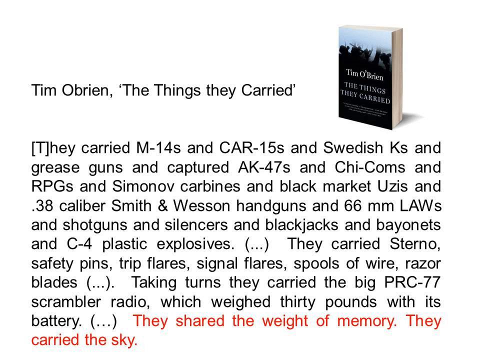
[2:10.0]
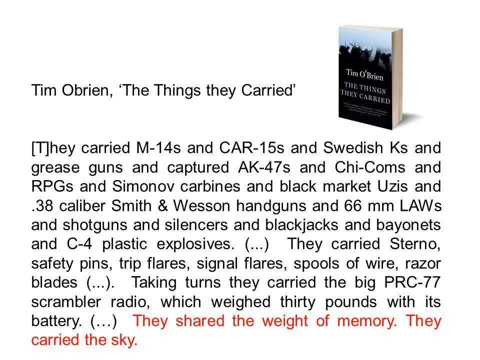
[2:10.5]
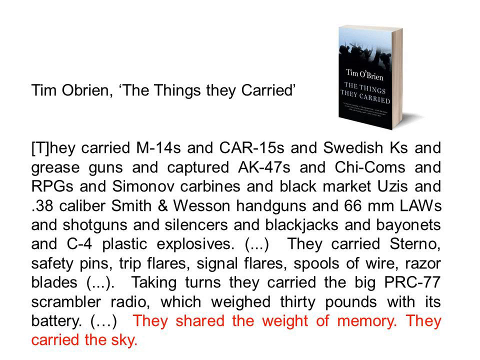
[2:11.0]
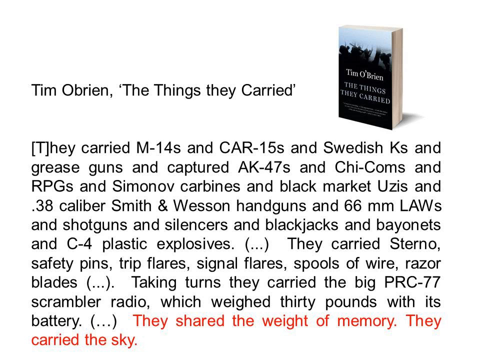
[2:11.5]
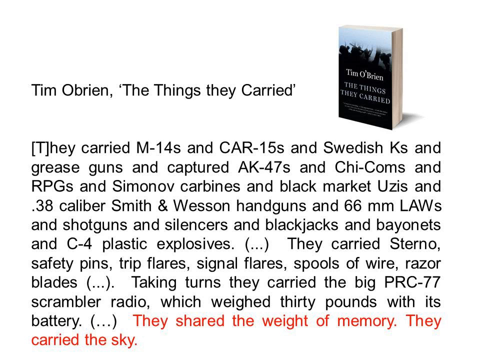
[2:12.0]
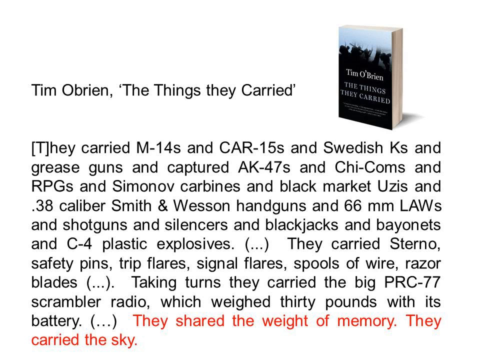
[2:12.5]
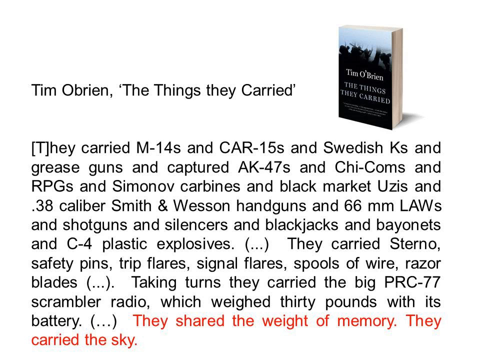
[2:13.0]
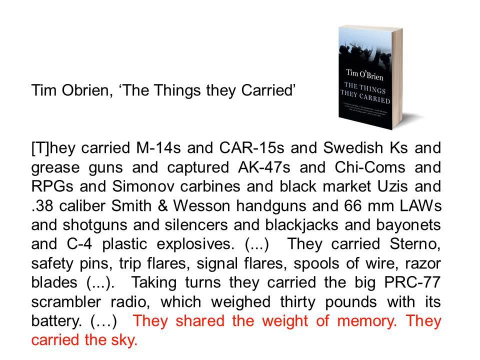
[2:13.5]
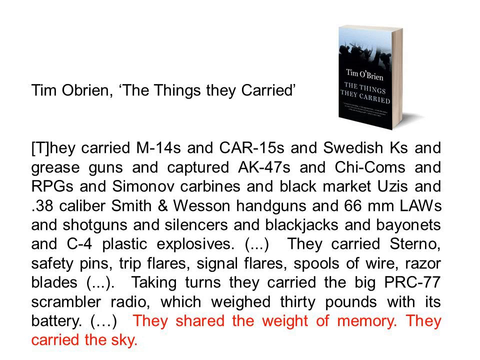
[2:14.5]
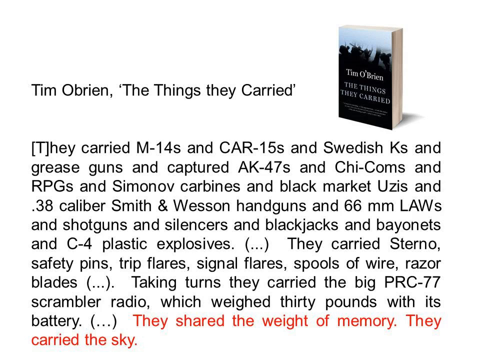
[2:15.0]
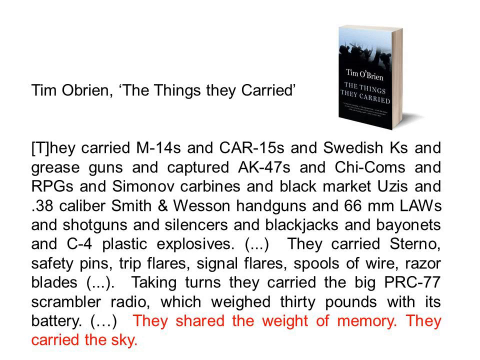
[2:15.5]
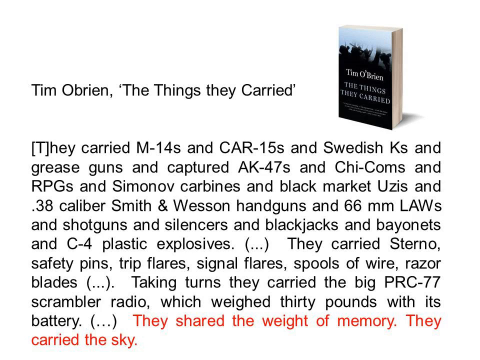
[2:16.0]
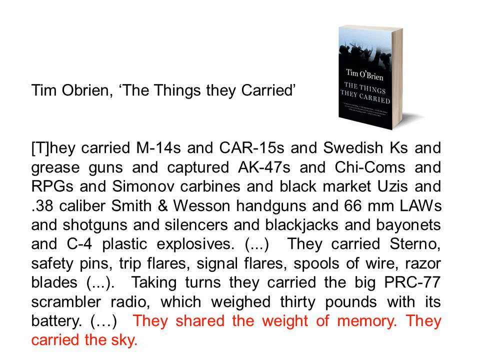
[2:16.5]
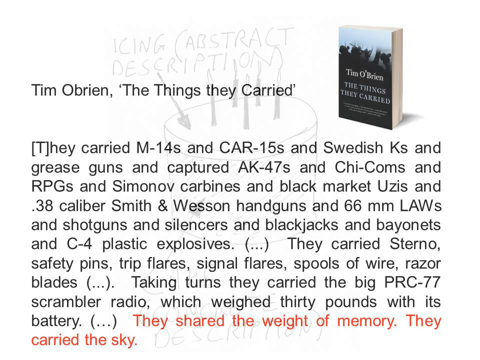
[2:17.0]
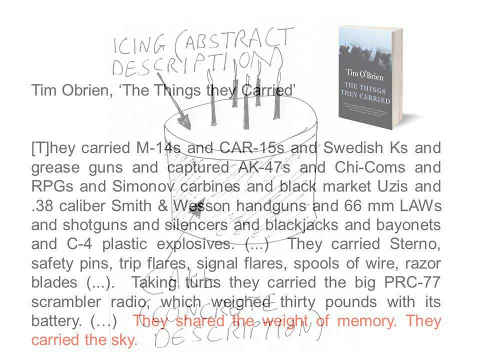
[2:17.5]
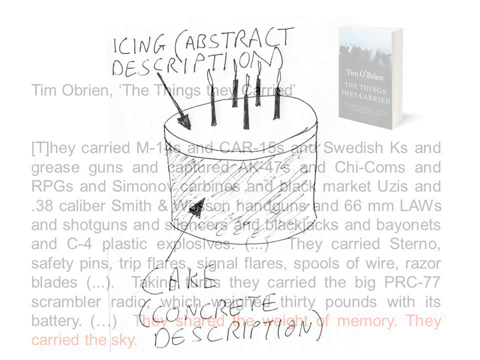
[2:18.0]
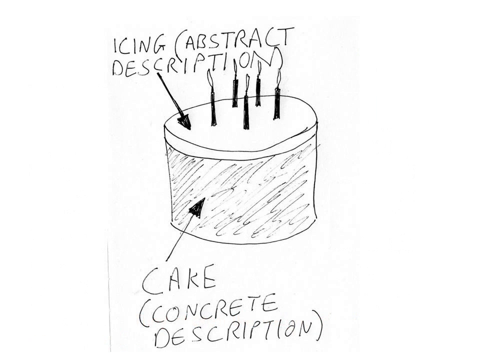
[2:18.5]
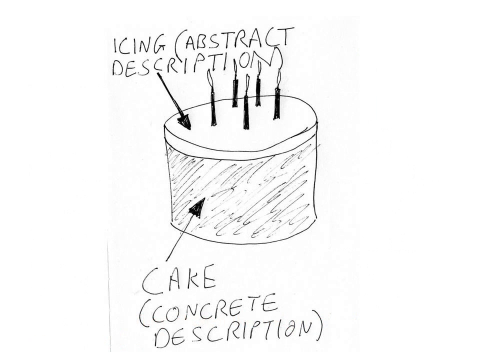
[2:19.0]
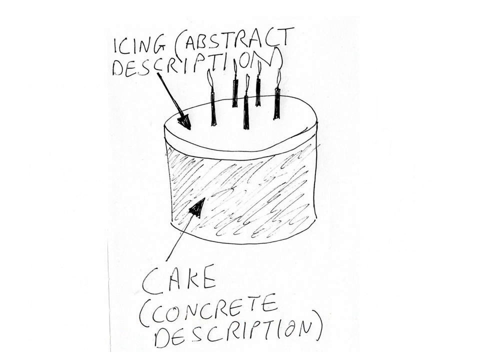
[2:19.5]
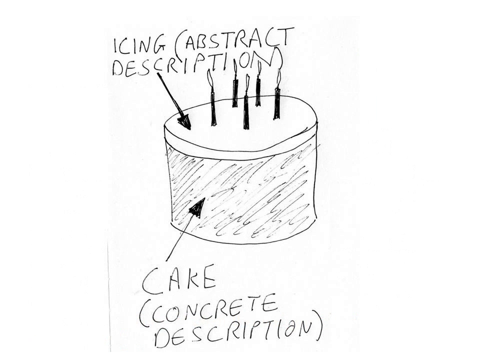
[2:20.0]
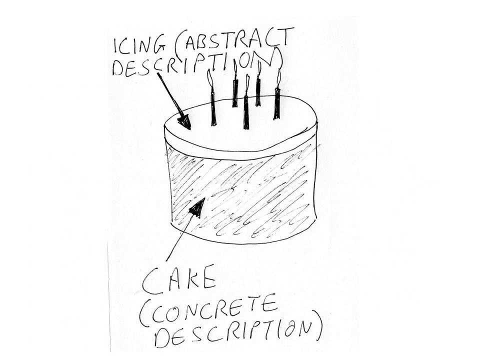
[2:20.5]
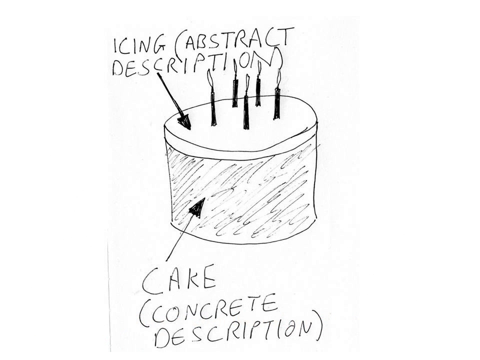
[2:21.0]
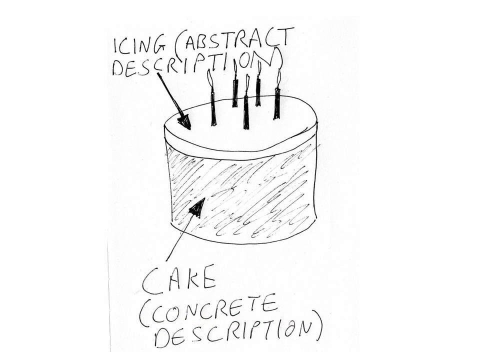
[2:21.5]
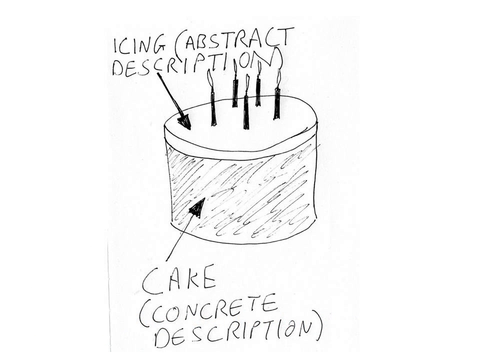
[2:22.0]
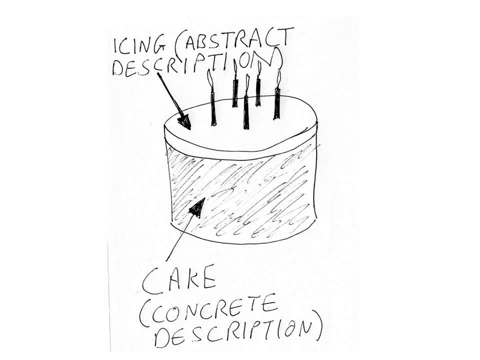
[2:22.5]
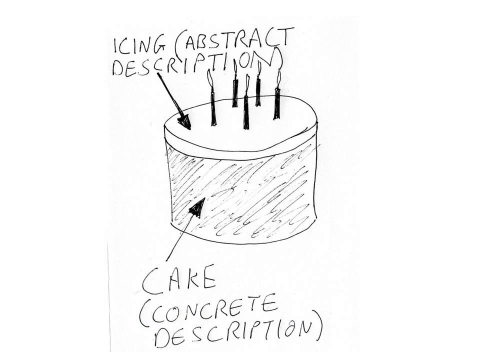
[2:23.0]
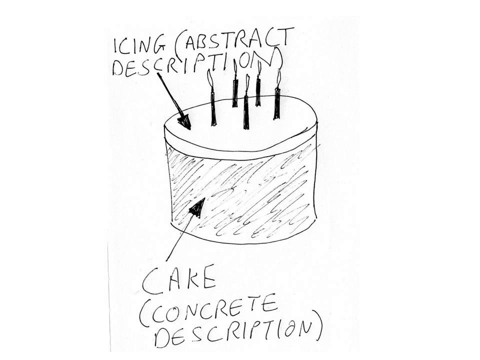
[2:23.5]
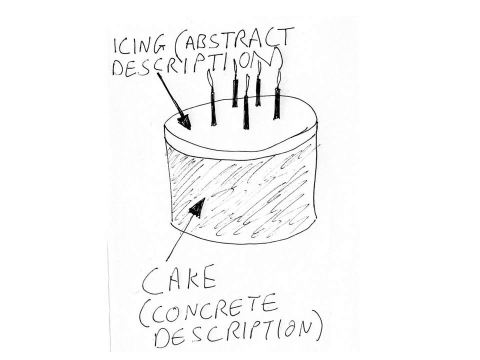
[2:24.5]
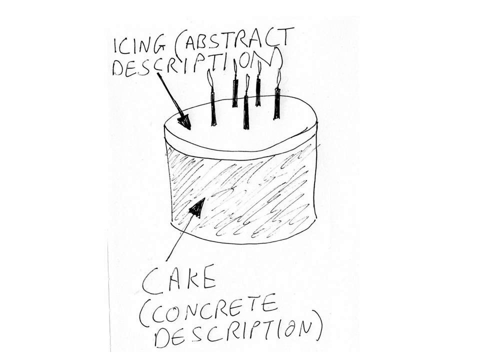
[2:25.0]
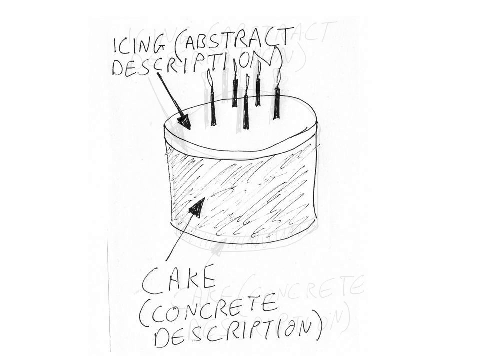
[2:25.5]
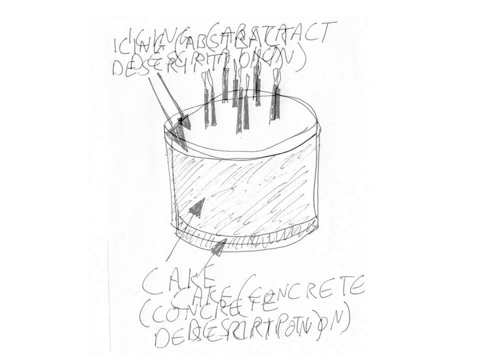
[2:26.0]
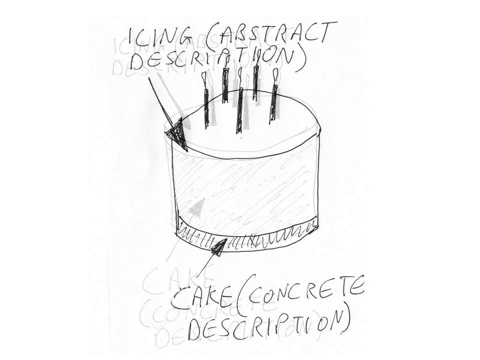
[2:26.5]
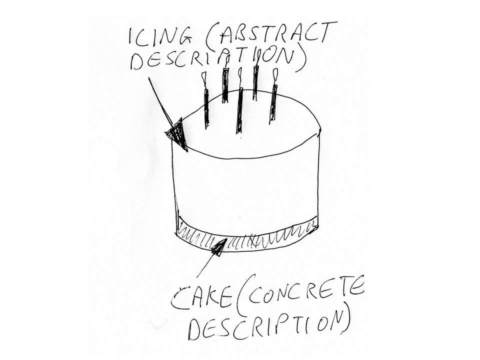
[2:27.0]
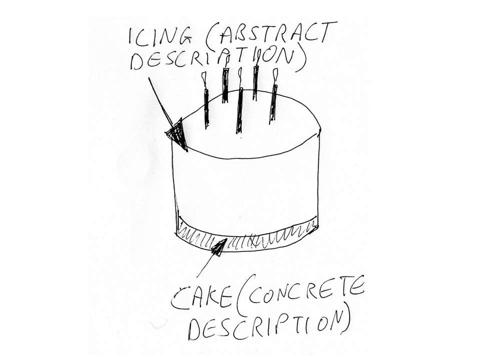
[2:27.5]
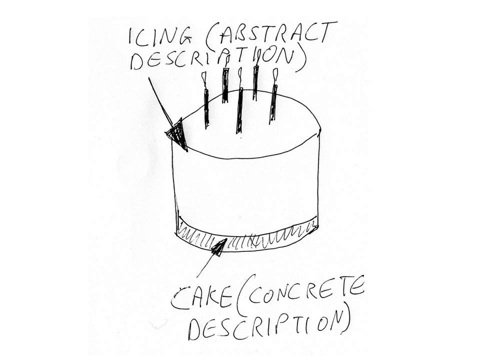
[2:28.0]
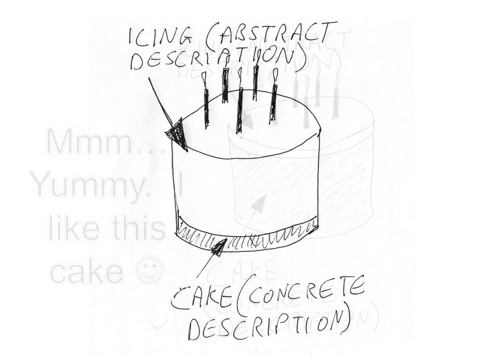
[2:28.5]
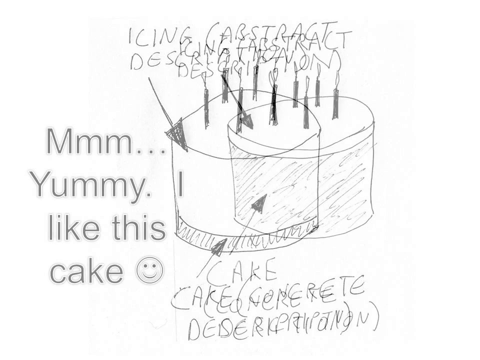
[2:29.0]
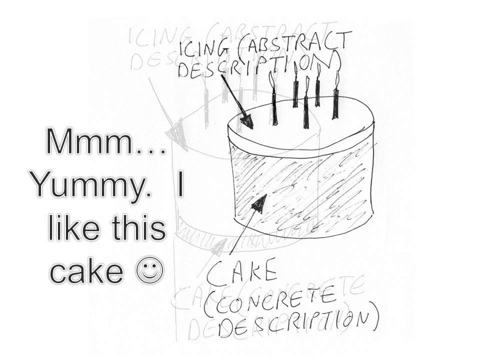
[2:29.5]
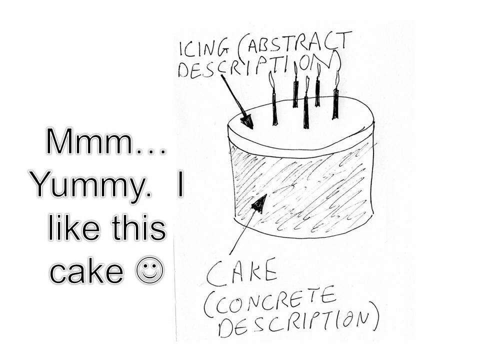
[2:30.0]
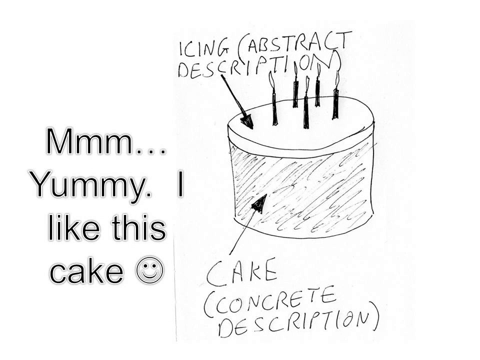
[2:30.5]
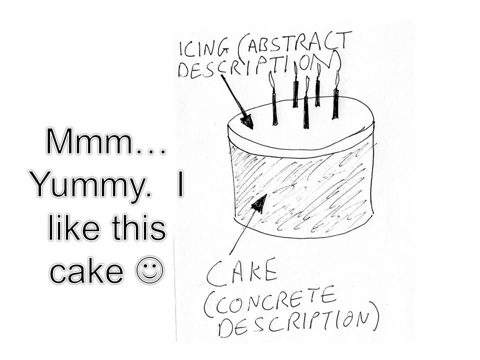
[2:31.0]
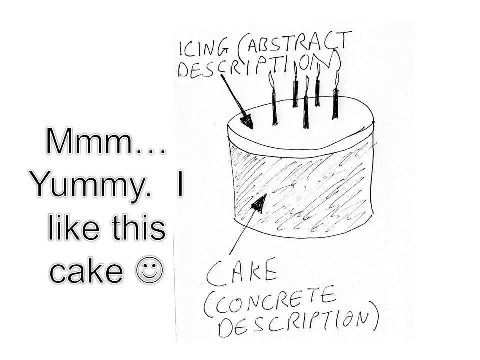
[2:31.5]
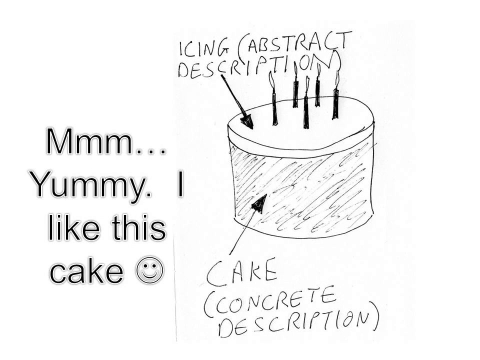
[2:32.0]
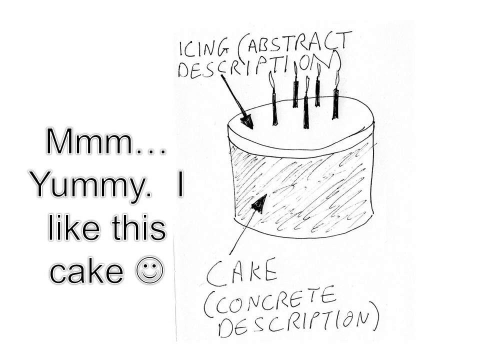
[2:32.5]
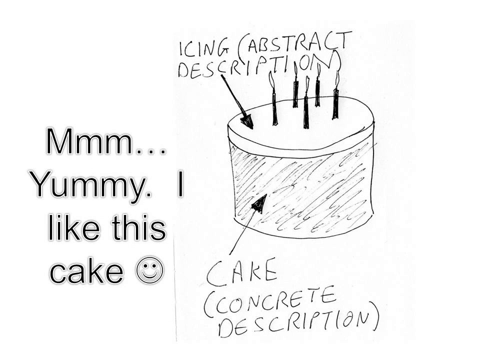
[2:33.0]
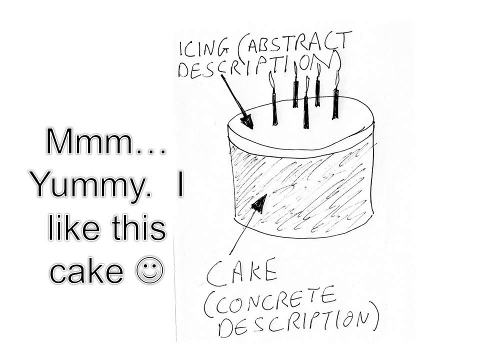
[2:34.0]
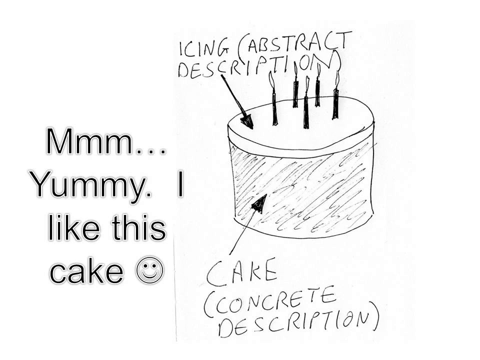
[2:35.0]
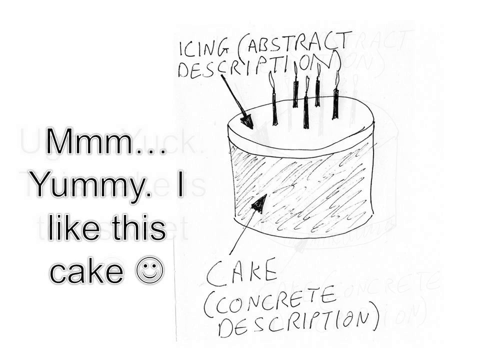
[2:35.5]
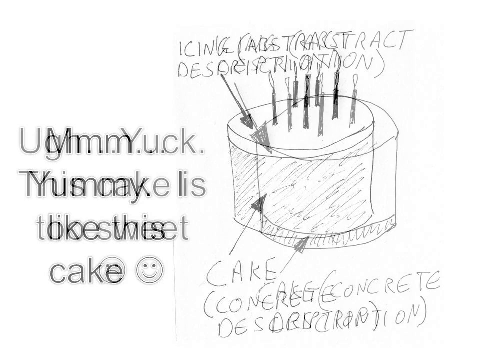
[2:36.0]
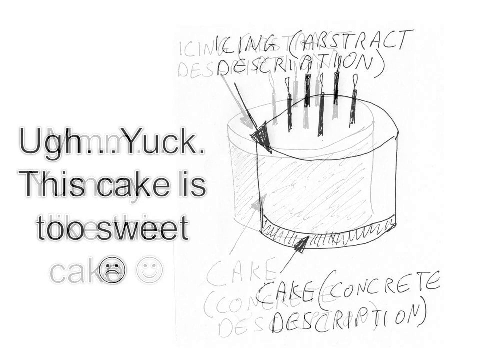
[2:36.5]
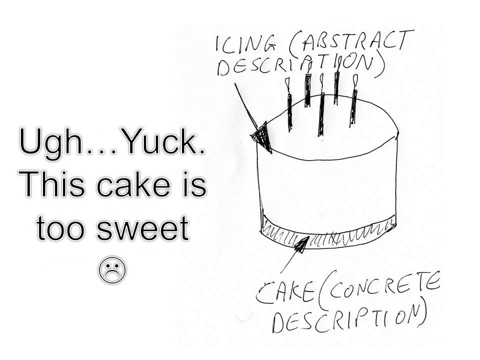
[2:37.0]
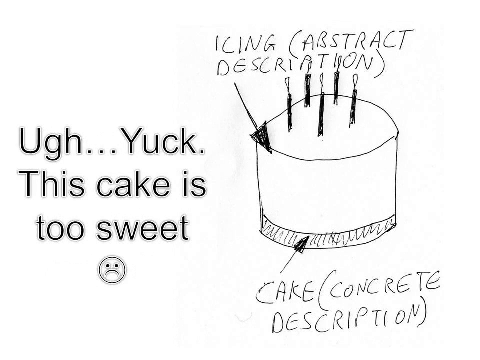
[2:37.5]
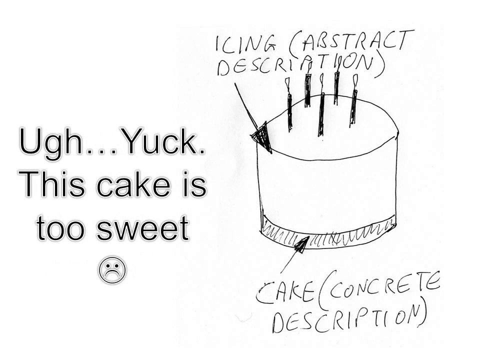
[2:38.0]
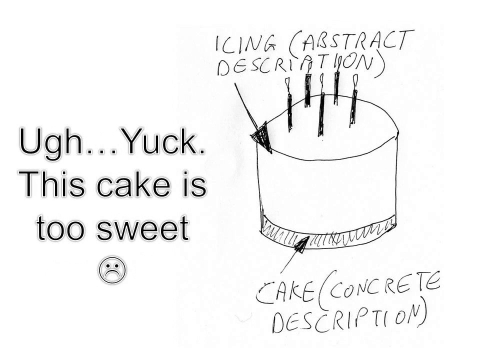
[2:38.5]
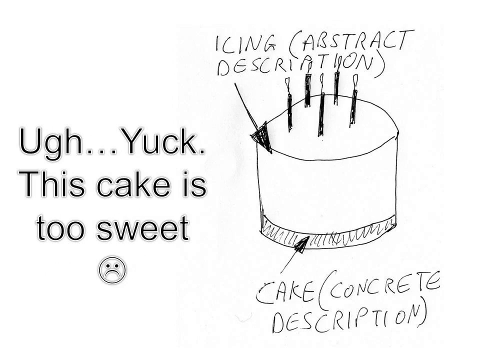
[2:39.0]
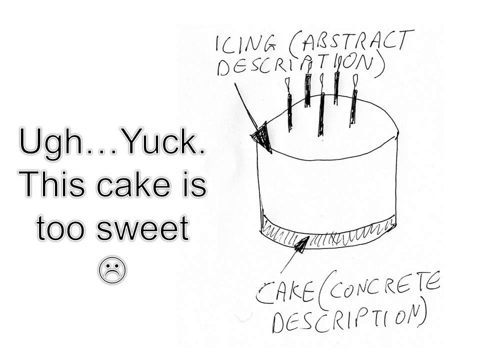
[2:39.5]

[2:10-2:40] On a white background, a book in the top right corner says "Tim O'Brien, The Things They Carried", and beside it the same words appear. The text below reads "they carried M-14s and CAR-15s and Swedish Ks and Grease Guns and captured AK-47s and Chi-Coms and RPGs and Simonov Carbines and Black Market Uzis and .38 caliber Smith and Wesson handguns and 66 millimeter LAWs and shotguns and silencers, and blackjacks, and bayonets, and C4 plastic explosives. They carried Sterno safety pins, trip flares, signal flares, spools of wire, razor blades. Taking turns, they carried the big PRC-77 scrambler radio, which weighed 30 pounds with its battery. They shared the weight of memory, they carried the sky." The scene then changes to a drawing of a cake. Writing above the cake says "icing, abstract description", and writing below it says "cake, concrete description". Text then pops up beside the cake saying "mmm yummy. I like this cake" with a smiley face emoji, followed by more text saying "oh yuck this cake is too sweet" with a sad emoji.